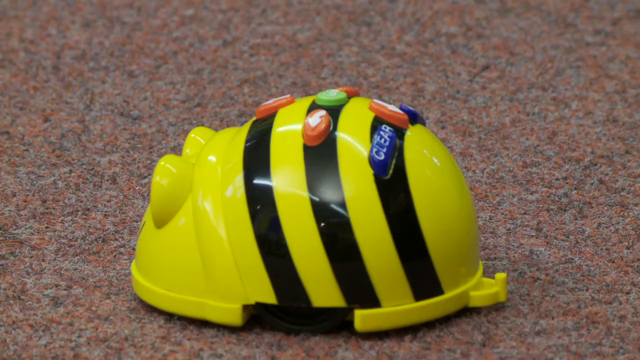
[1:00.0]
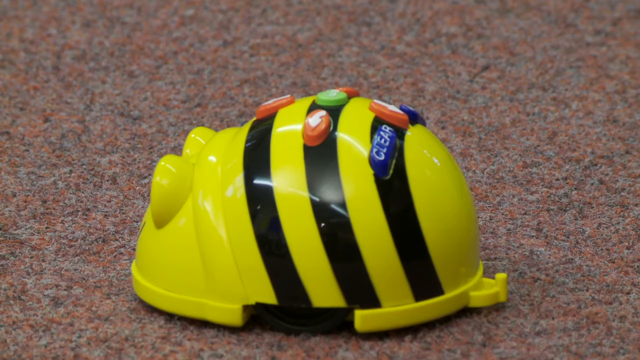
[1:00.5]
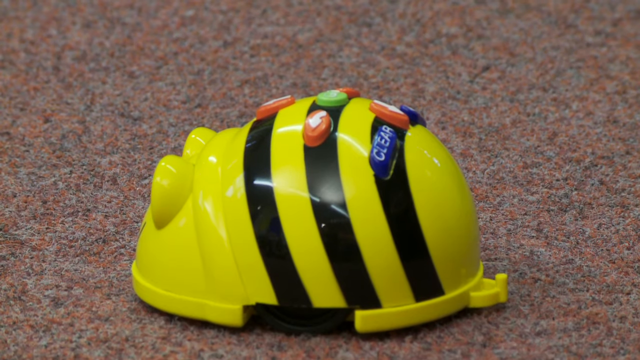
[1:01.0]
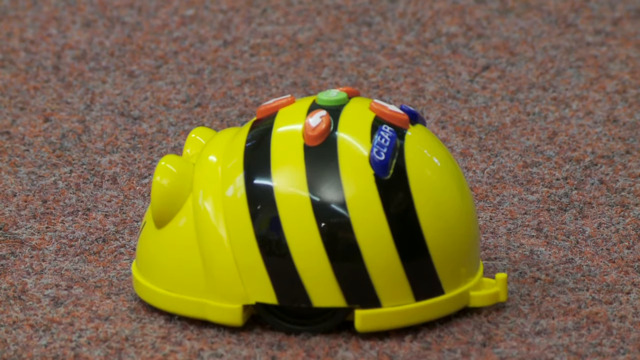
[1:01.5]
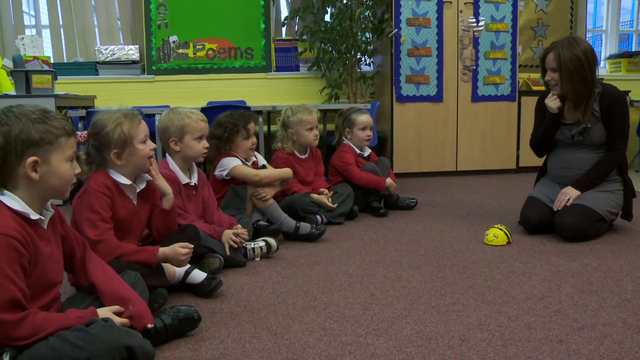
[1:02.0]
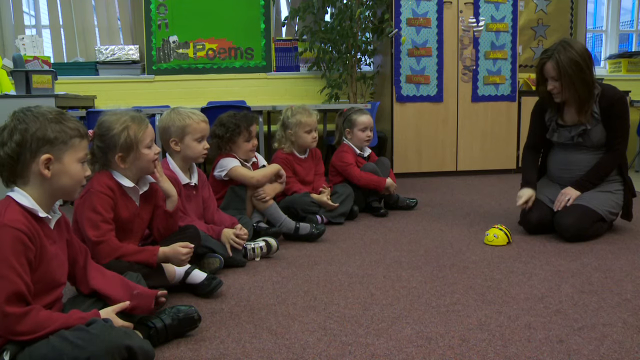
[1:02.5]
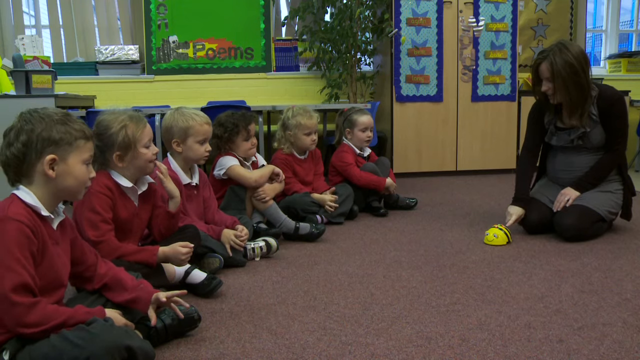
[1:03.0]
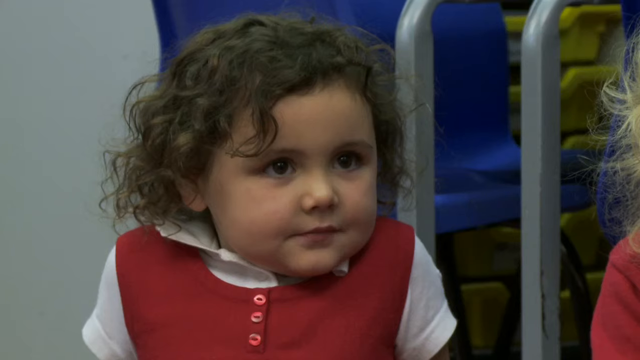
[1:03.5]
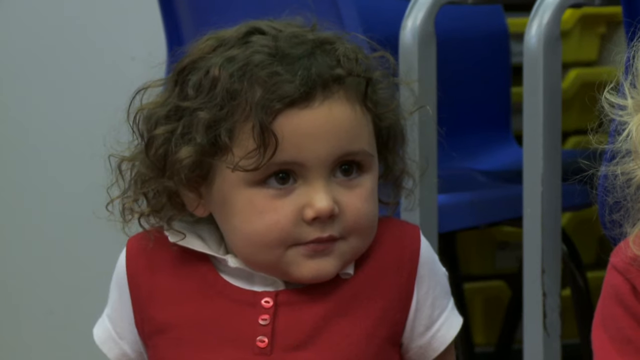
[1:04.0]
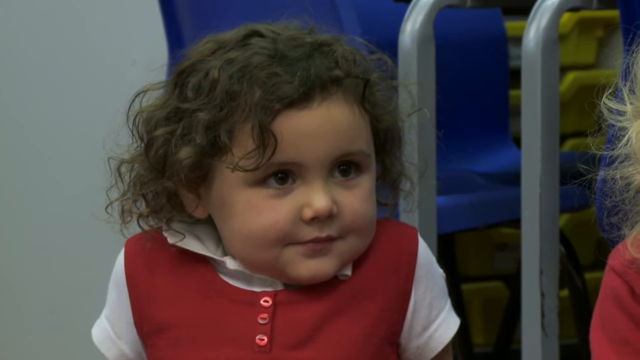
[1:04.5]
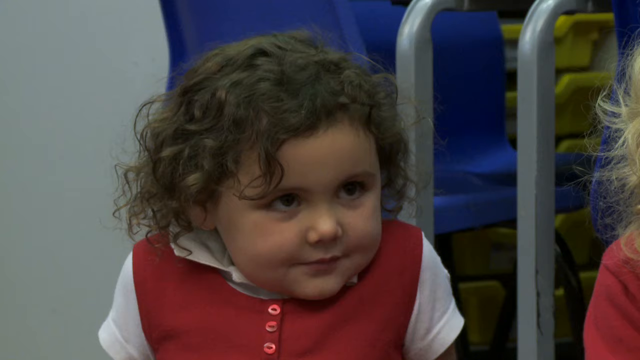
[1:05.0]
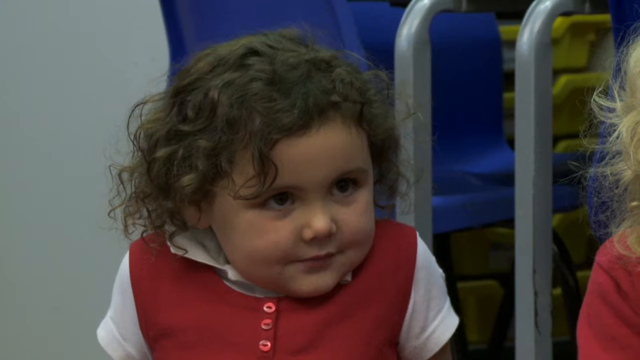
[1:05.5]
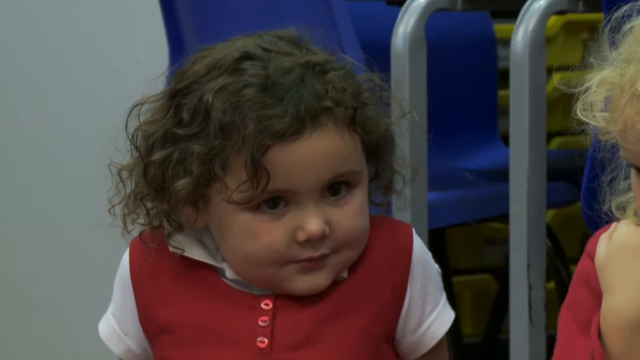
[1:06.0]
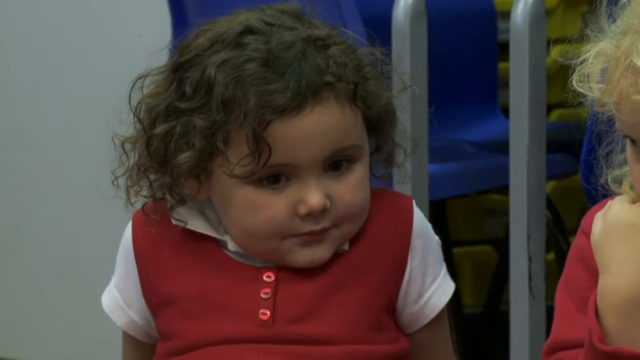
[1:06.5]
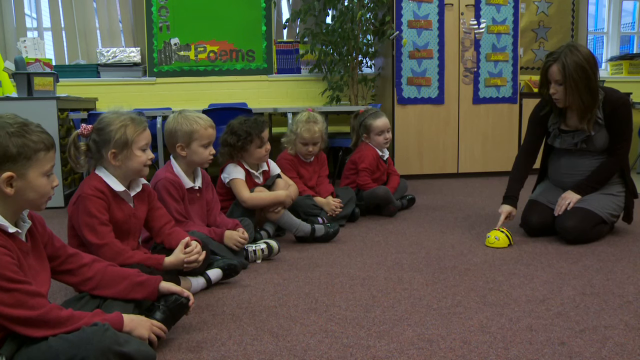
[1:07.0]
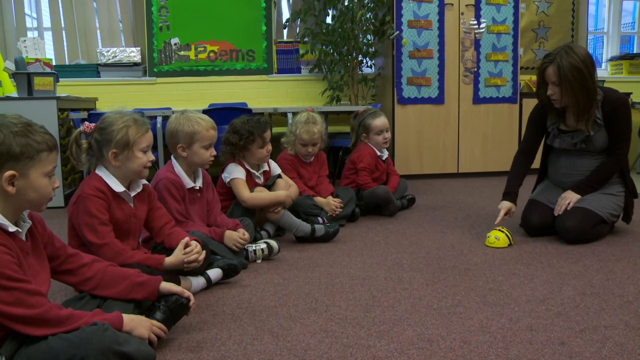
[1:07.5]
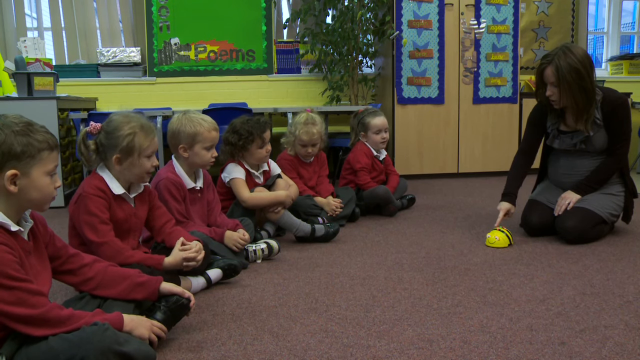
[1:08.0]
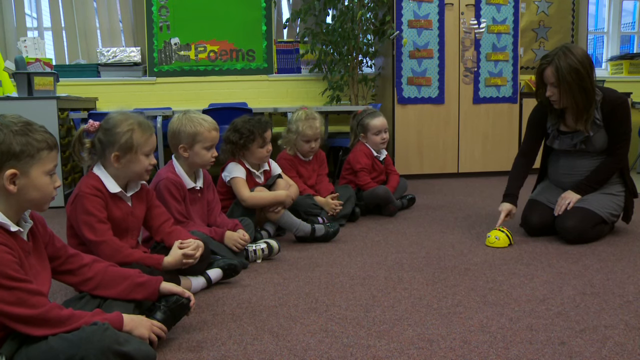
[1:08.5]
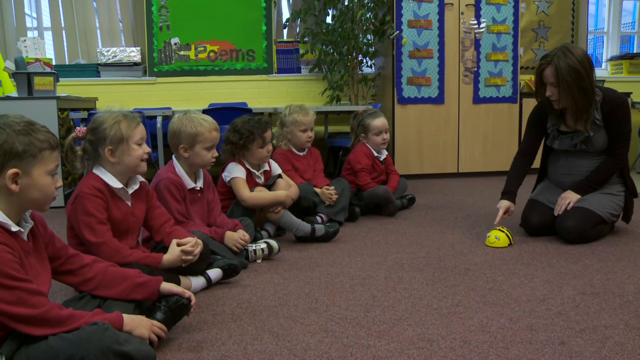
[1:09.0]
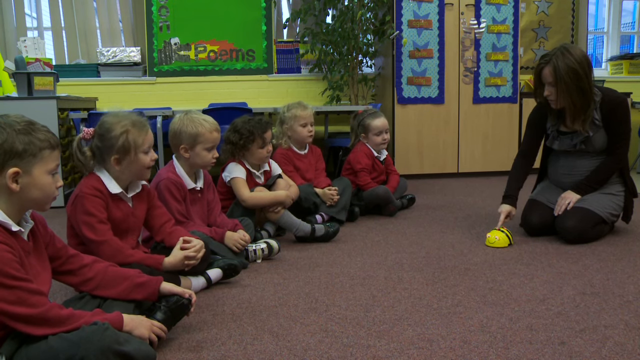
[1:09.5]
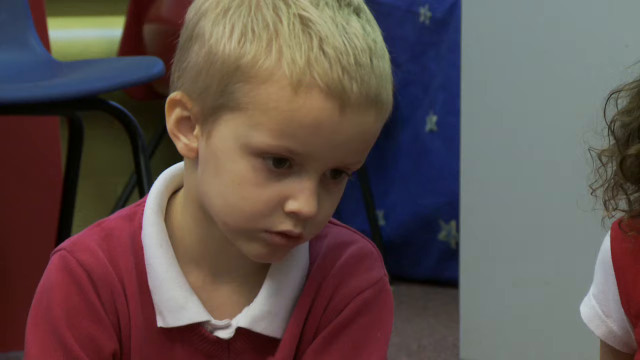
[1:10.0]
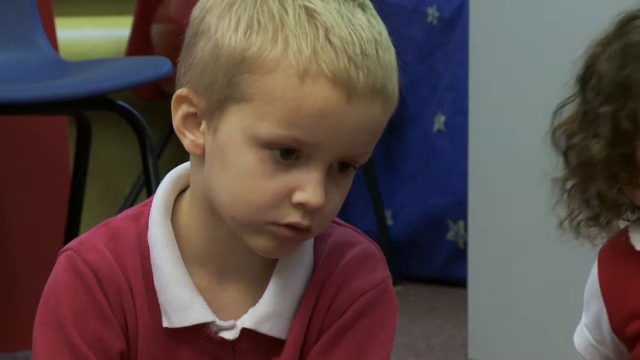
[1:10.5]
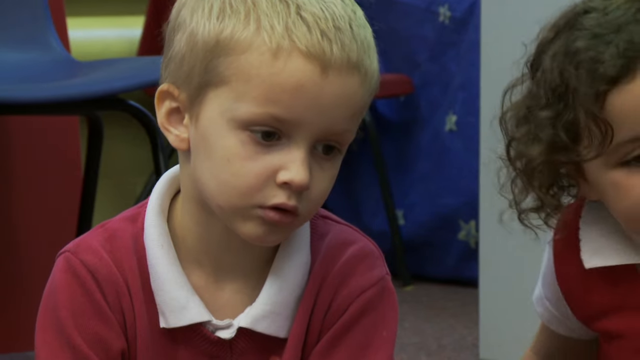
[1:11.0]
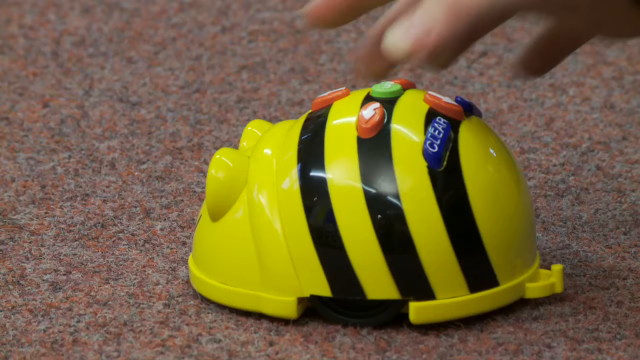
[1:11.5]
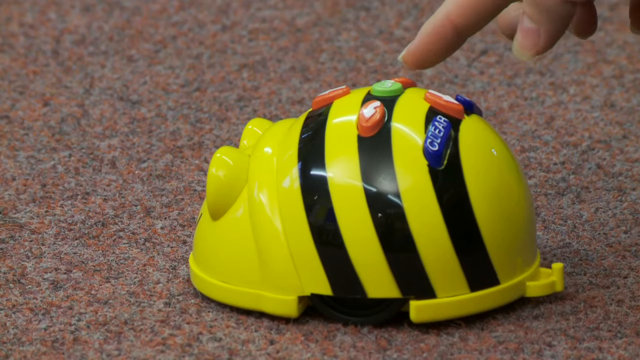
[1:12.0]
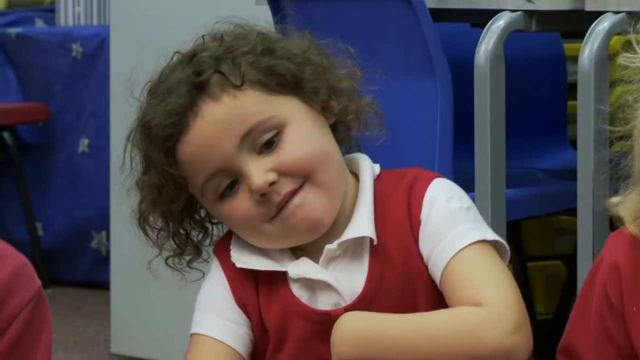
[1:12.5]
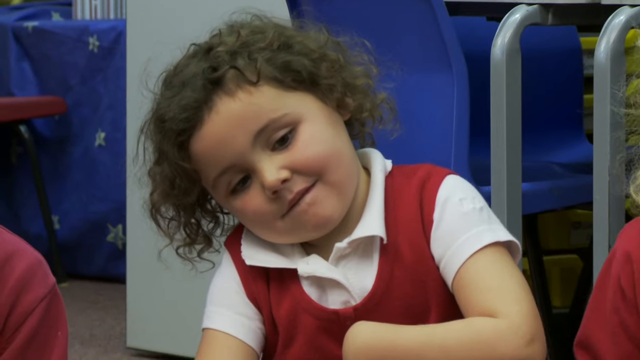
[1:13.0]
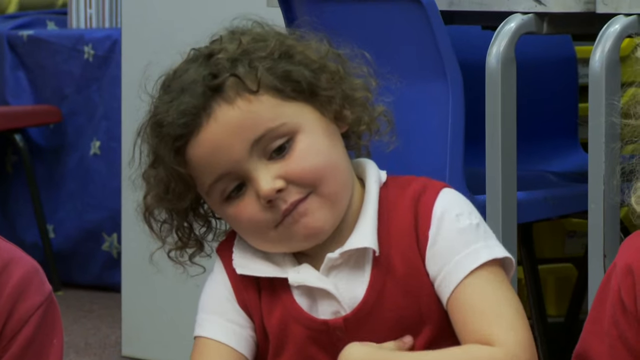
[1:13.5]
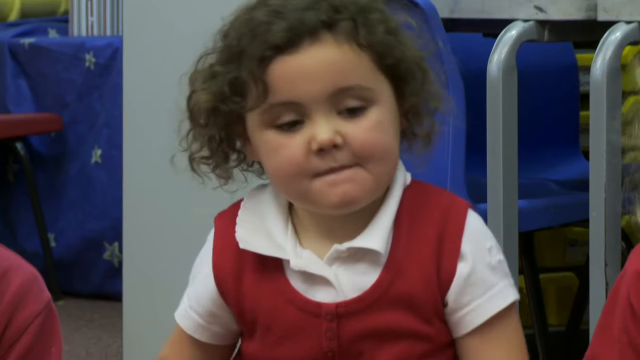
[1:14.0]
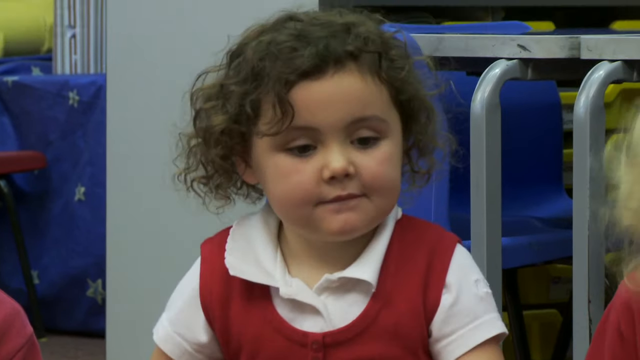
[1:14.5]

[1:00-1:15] The woman lowers her finger towards the bee bot as if to press a button, and the camera pans away to a close-up of a child watching the demonstration. The woman then presses several different buttons on the floor robot, and different lights and reactions go off depending on the buttons she pushes. This time the bee bot does not move; it simply lights up while the children look on and respond to the woman. She presses the same button several times, which appears to be the light green button.